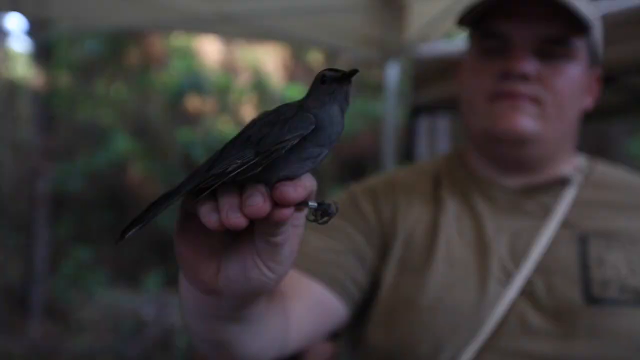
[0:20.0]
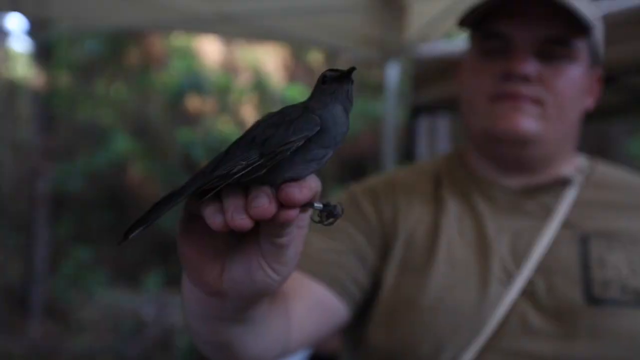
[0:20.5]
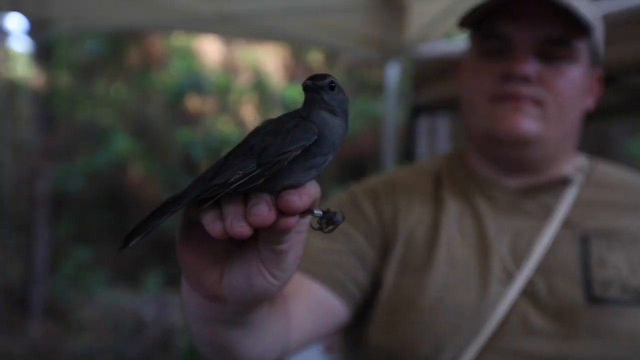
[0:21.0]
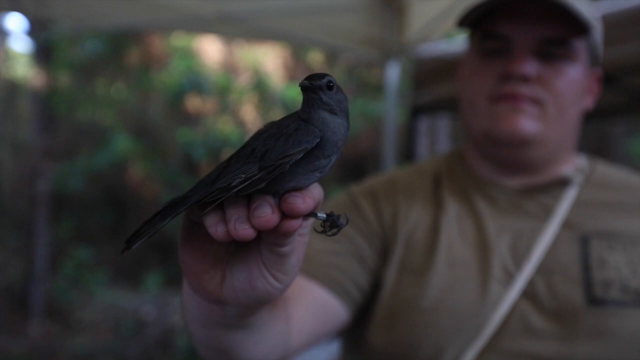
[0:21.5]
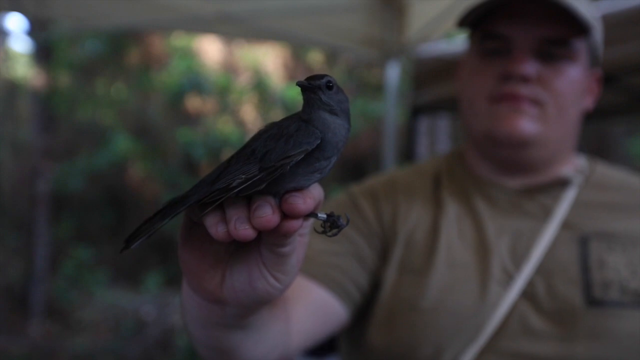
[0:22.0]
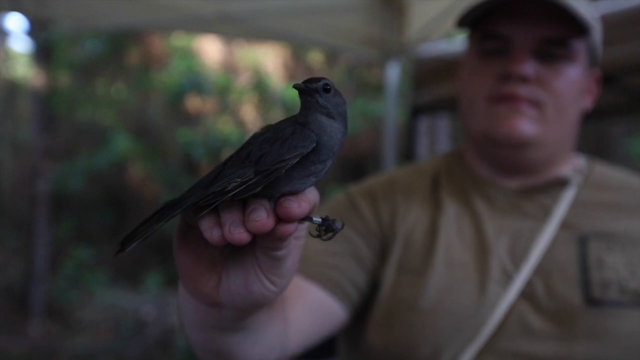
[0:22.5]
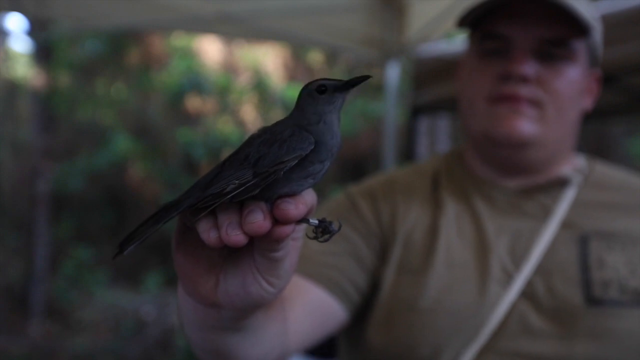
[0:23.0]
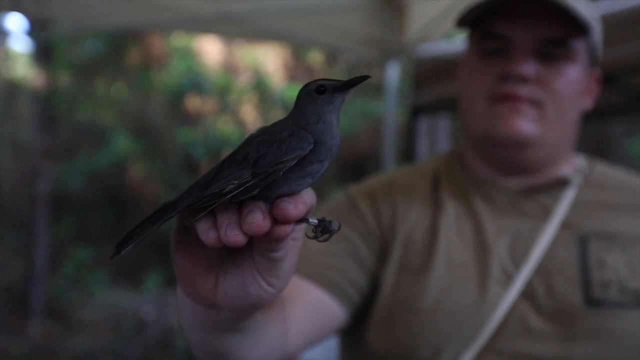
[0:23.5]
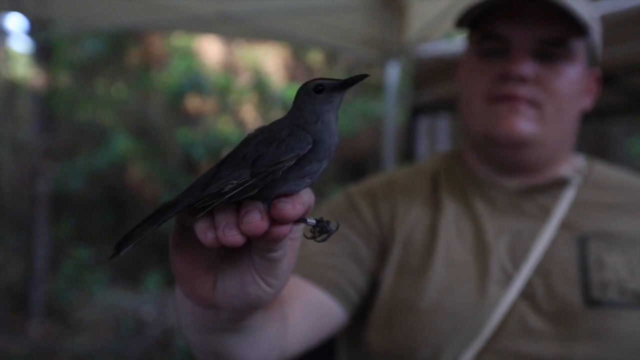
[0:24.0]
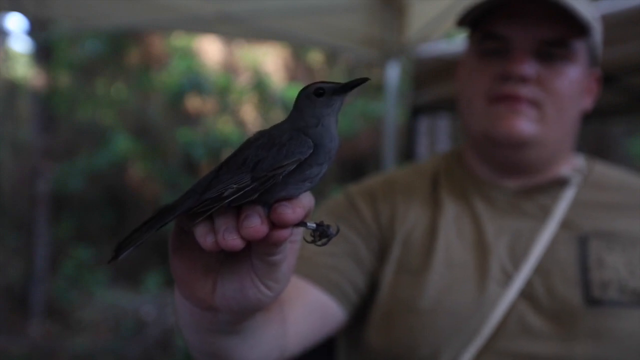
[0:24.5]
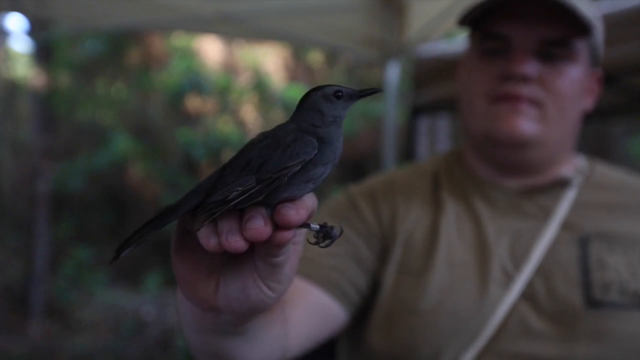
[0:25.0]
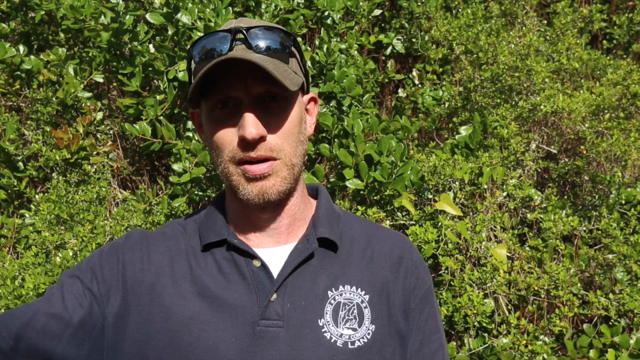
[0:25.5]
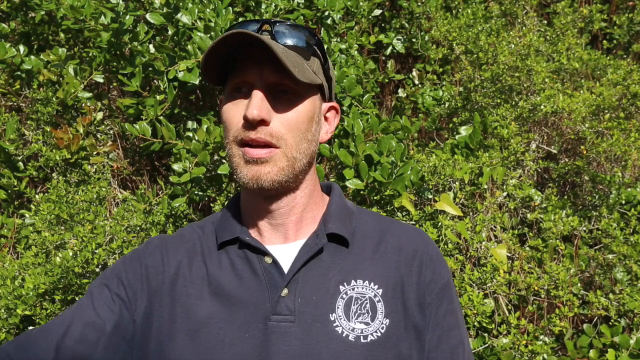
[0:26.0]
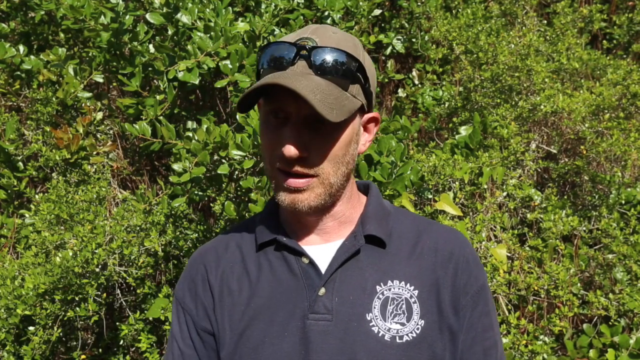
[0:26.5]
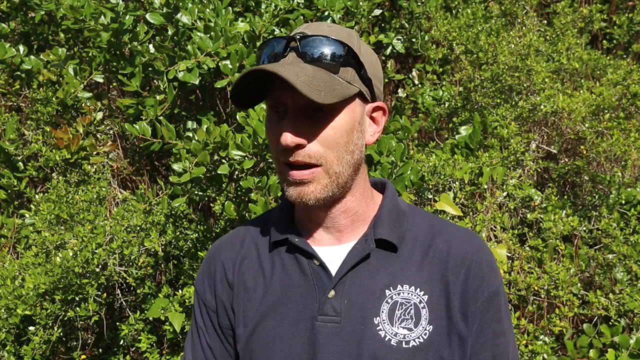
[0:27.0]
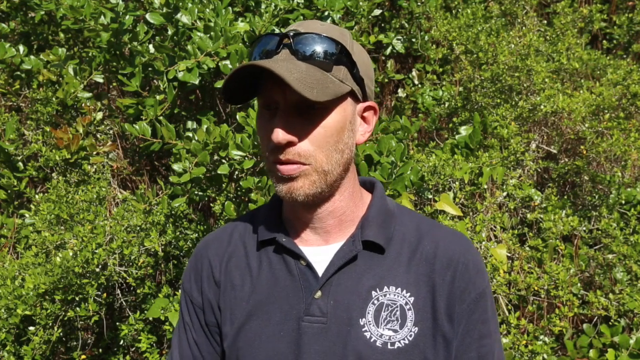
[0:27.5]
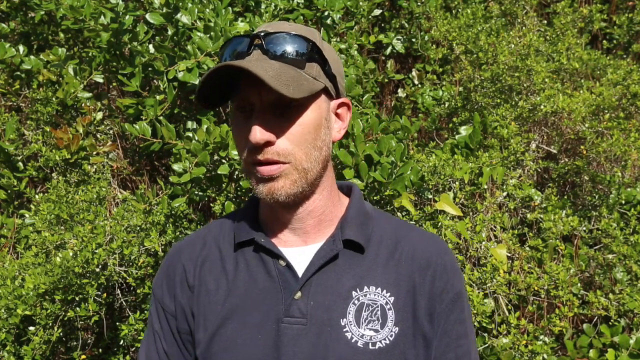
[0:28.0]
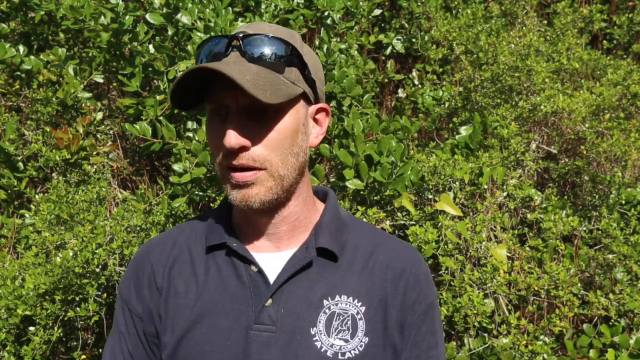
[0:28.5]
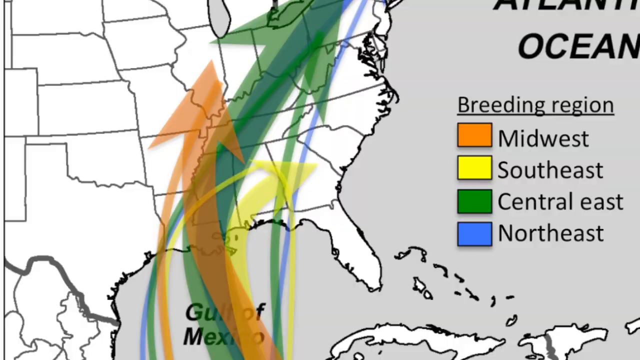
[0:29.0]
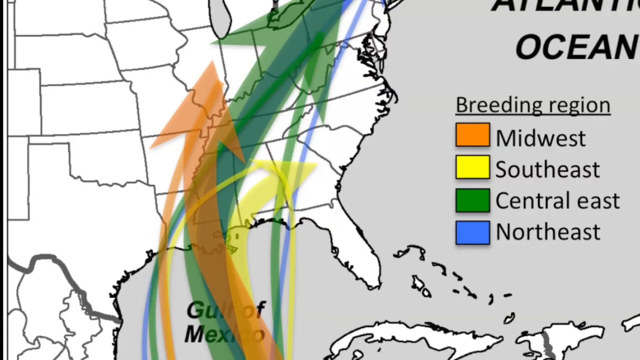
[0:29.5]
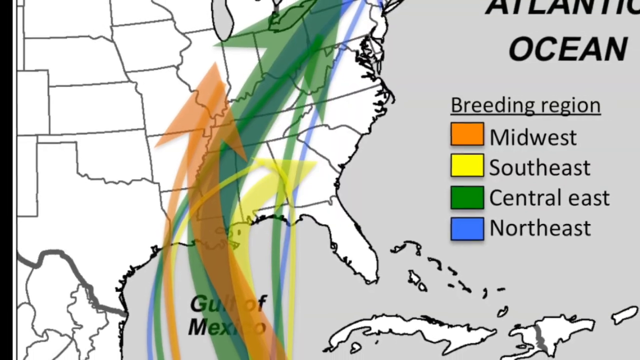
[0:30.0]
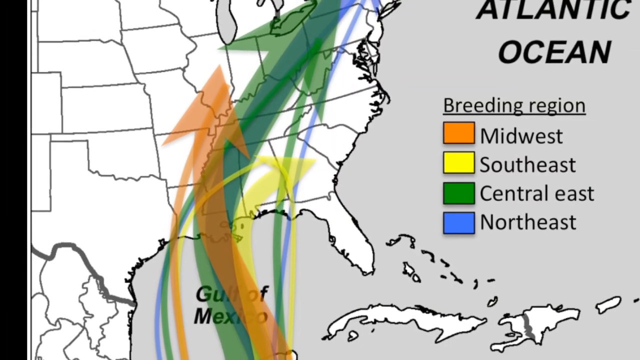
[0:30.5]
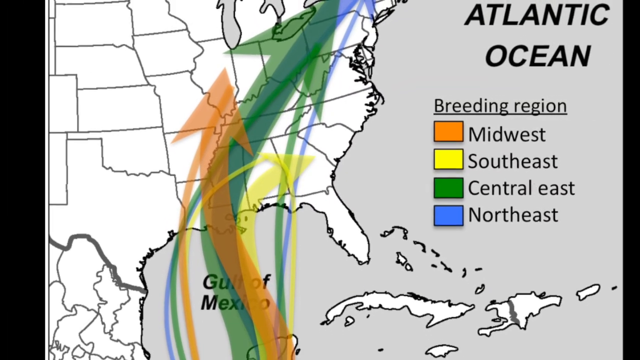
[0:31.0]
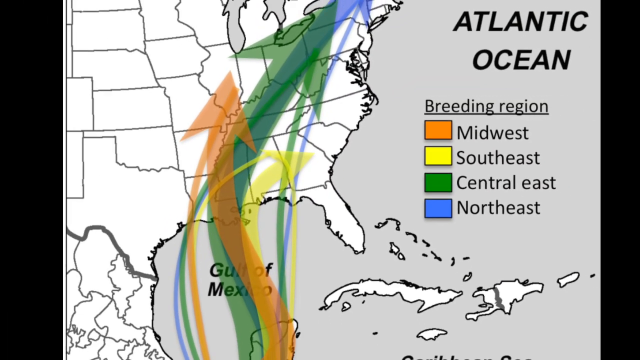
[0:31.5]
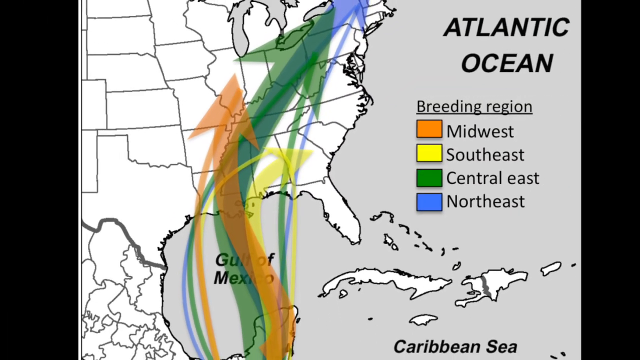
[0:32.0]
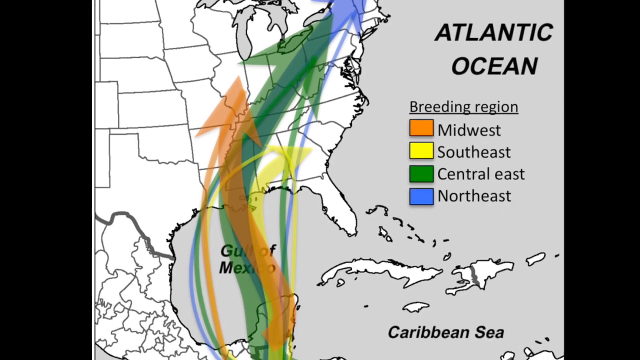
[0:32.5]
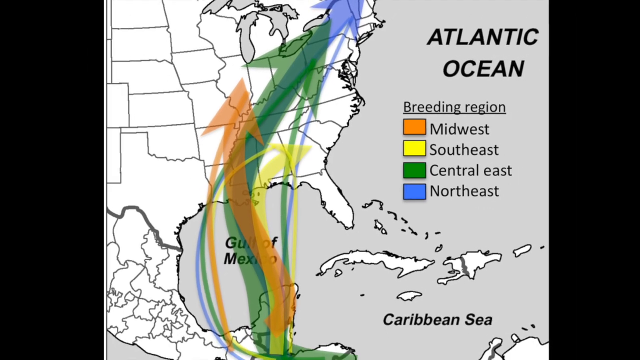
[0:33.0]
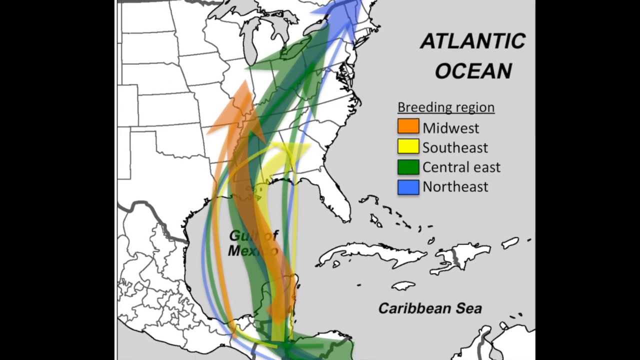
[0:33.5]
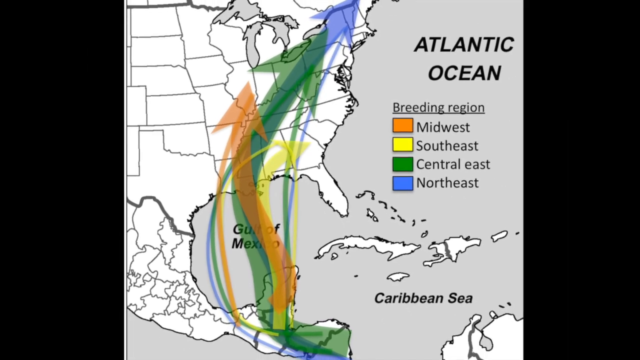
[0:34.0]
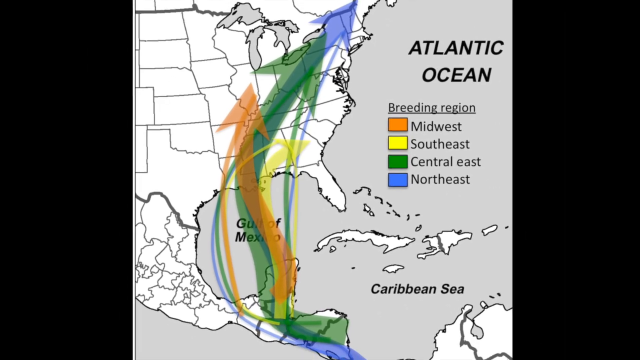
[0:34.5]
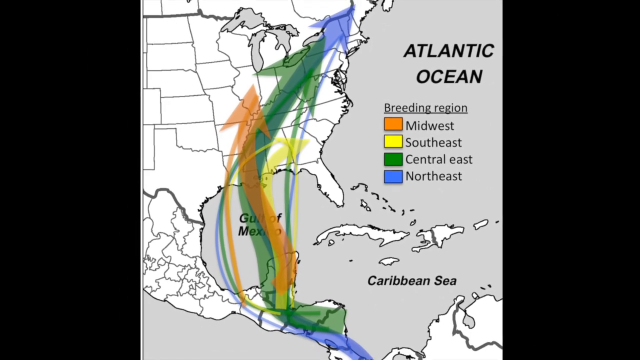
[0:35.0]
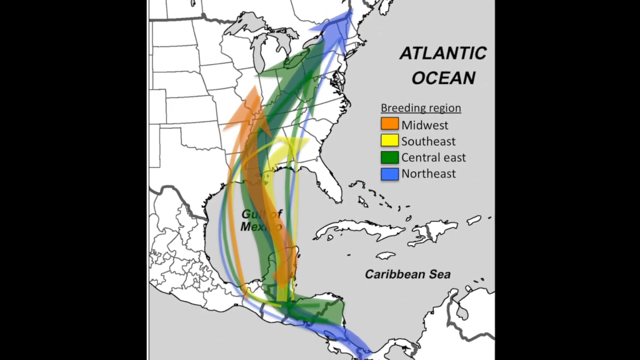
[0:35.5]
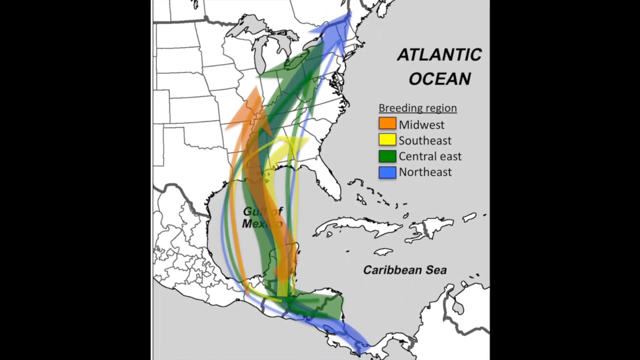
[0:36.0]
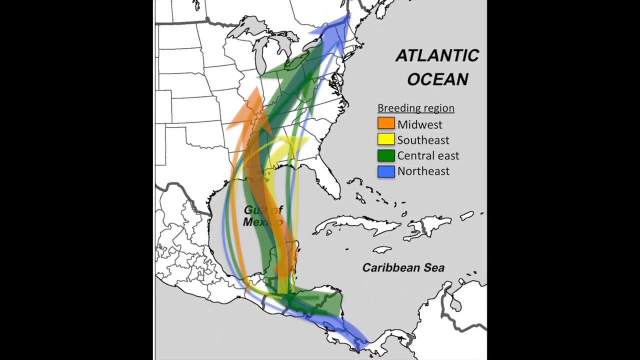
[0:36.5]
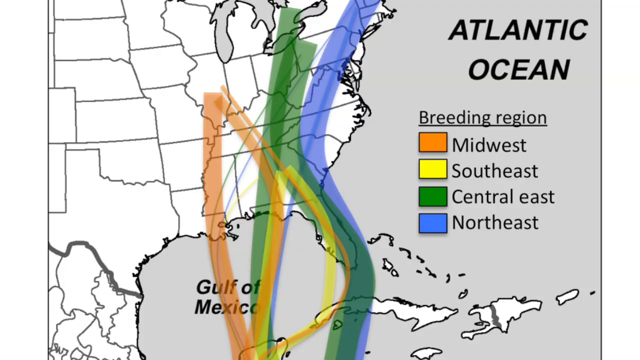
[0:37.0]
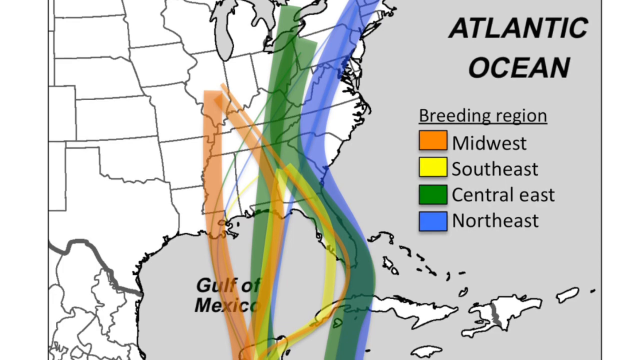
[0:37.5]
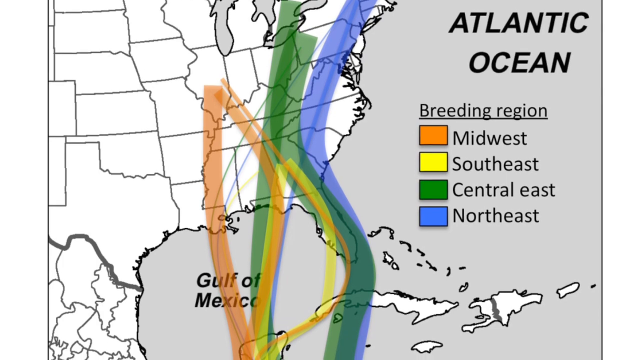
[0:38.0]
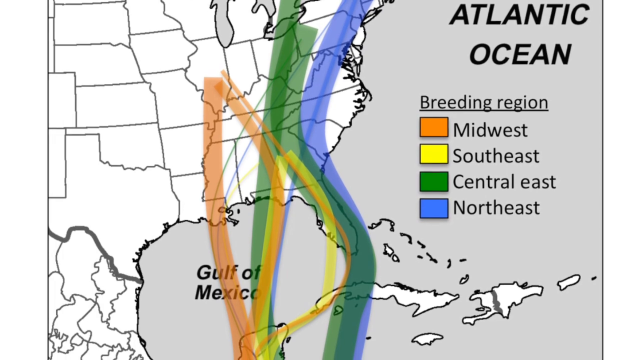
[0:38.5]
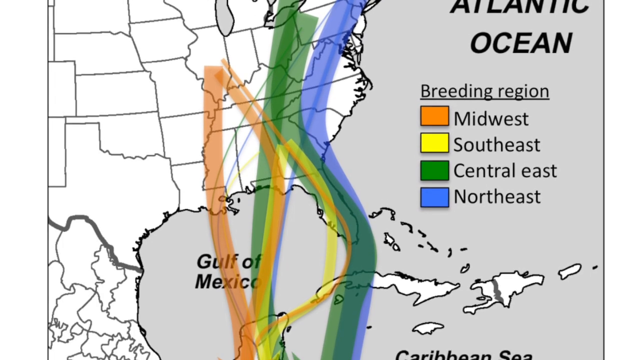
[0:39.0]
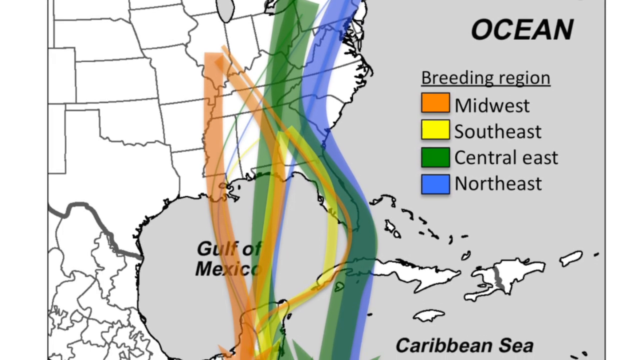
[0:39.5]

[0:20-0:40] A bird is held in the hand of a young, chubby man; as he looks at it, the bird keeps looking at him. The Alabama Department of Conservation man continues to speak, still standing, wearing a navy t-shirt that looks like a uniform. A map shows the Atlantic Ocean breeding region, divided into Midwest, Southeast, Central East and Northeast, with the Gulf of Mexico. The key colors are orange, yellow, green and blue, and arrows point to places on the map. Green represents Central East, which has the largest number; Northeast is second, Midwest third, and Southeast has the least.